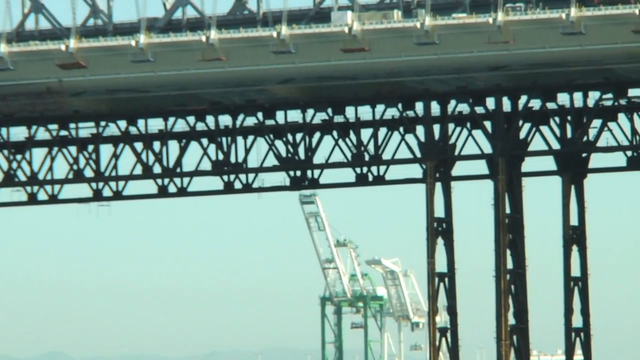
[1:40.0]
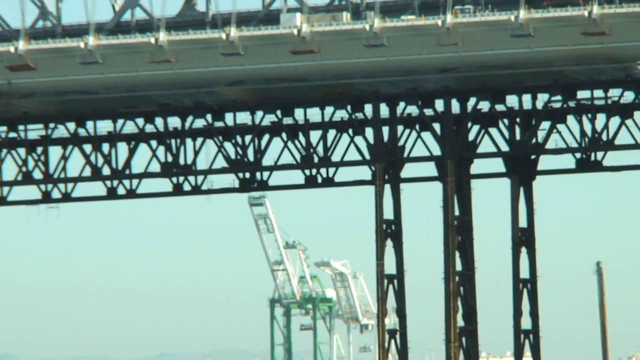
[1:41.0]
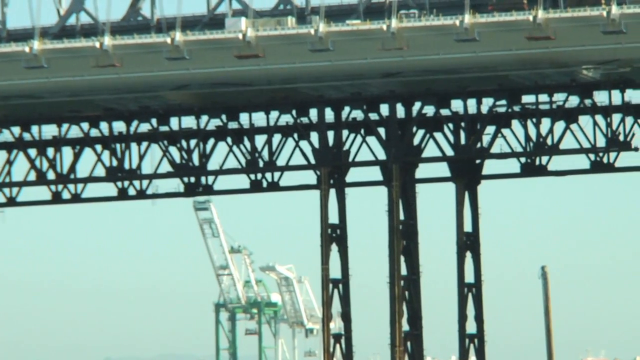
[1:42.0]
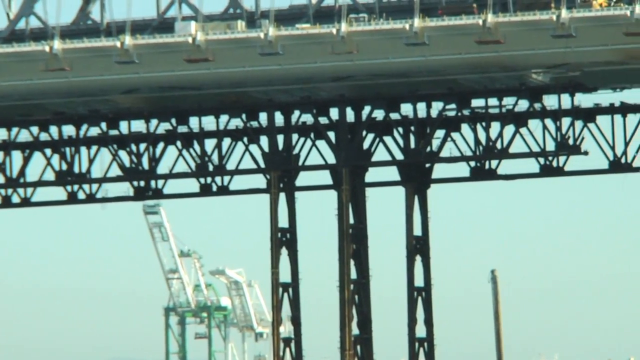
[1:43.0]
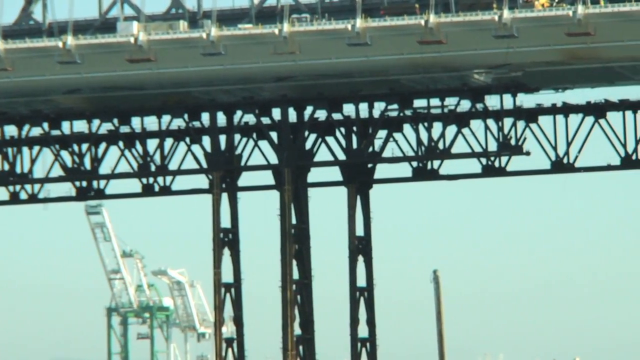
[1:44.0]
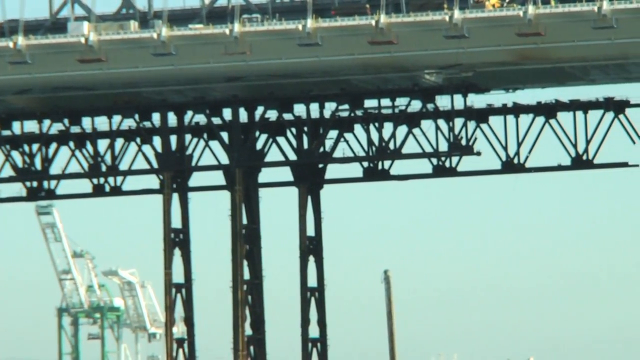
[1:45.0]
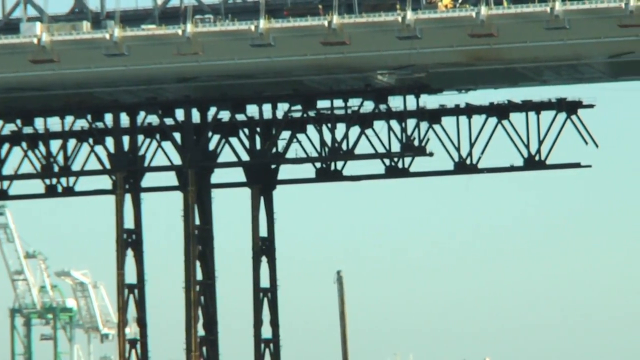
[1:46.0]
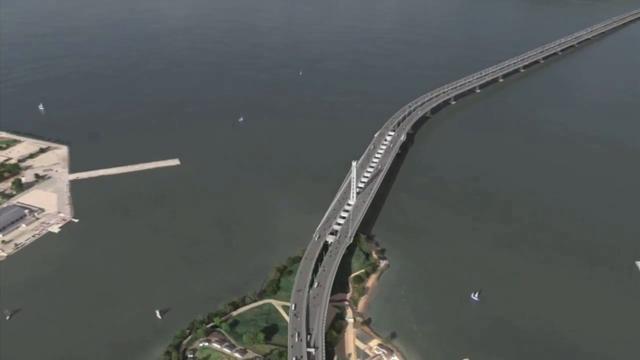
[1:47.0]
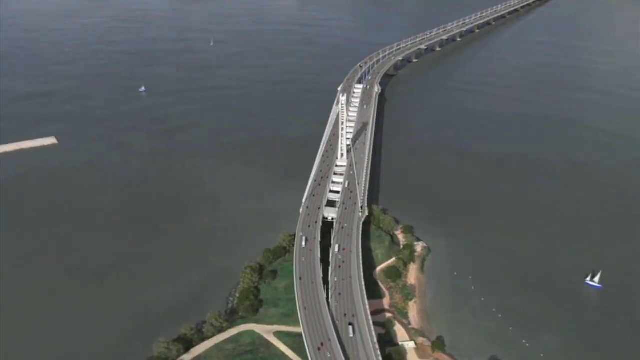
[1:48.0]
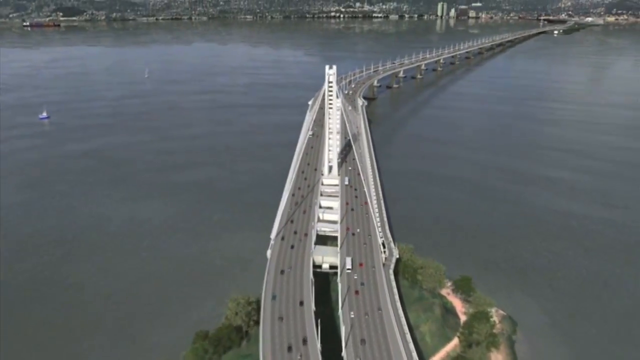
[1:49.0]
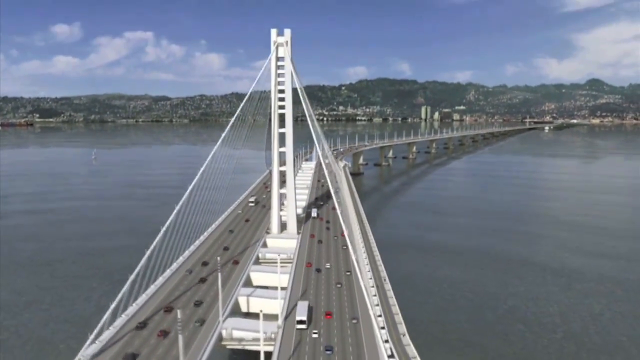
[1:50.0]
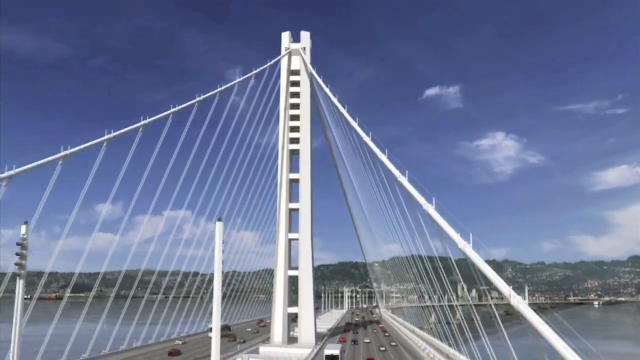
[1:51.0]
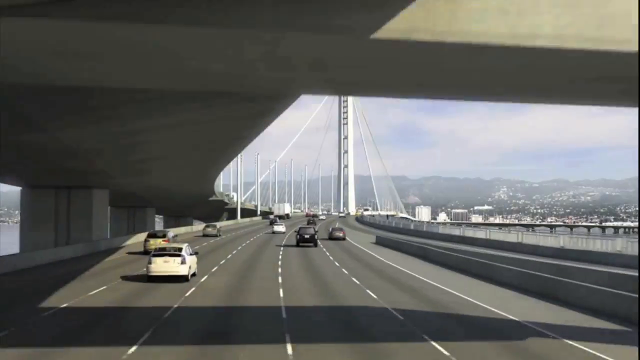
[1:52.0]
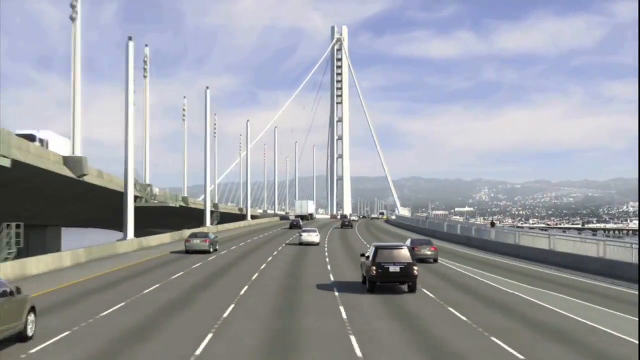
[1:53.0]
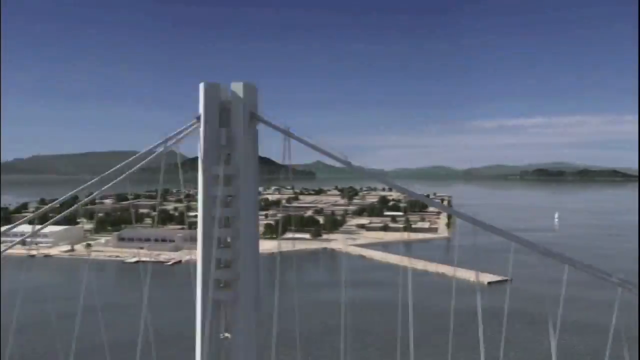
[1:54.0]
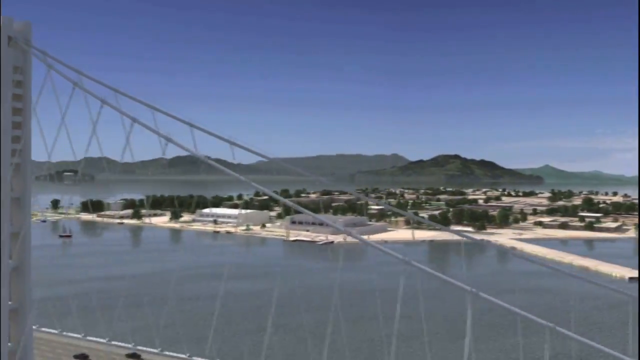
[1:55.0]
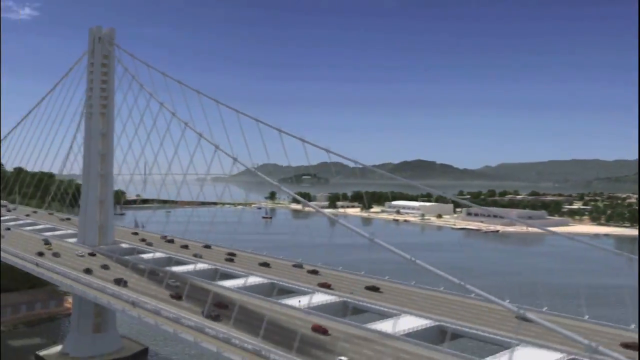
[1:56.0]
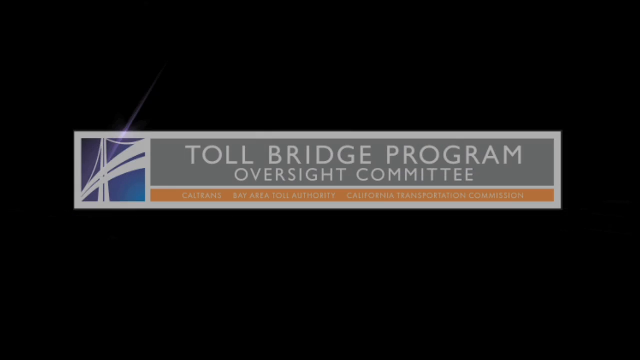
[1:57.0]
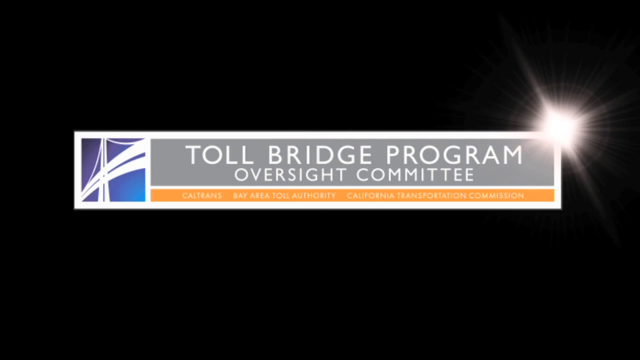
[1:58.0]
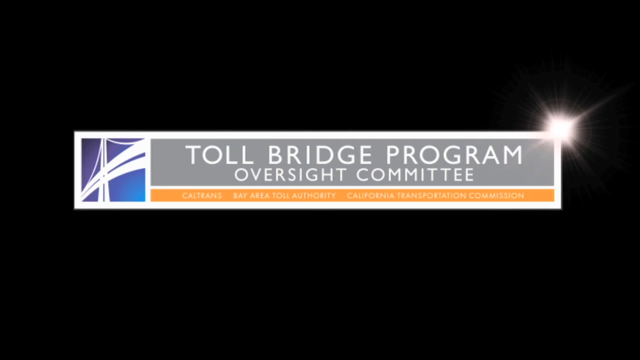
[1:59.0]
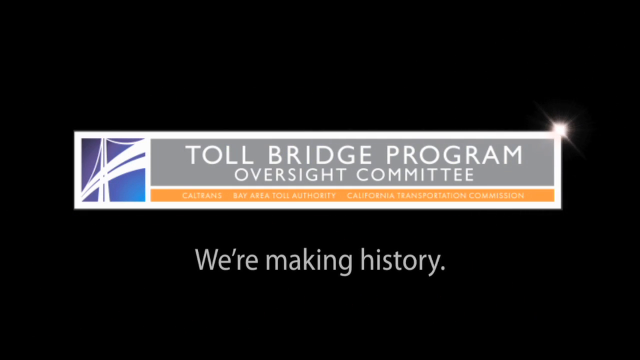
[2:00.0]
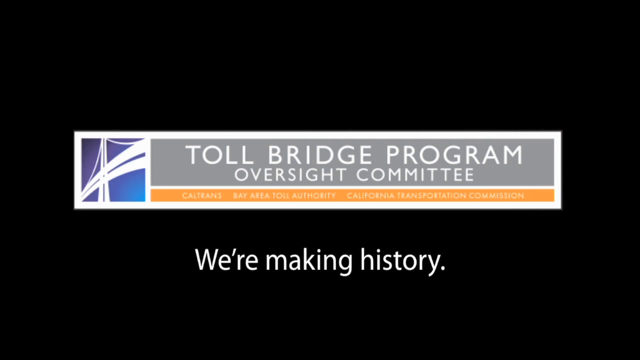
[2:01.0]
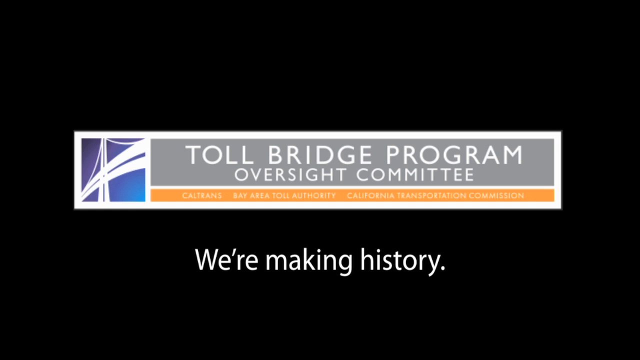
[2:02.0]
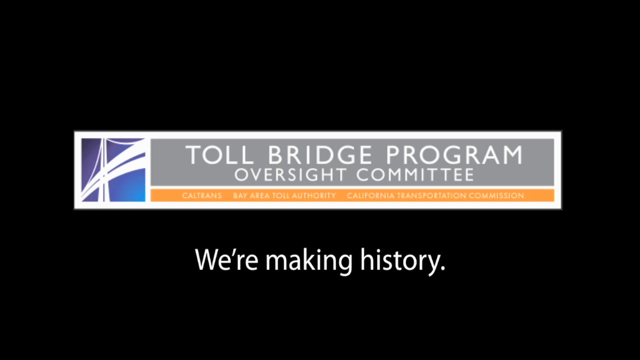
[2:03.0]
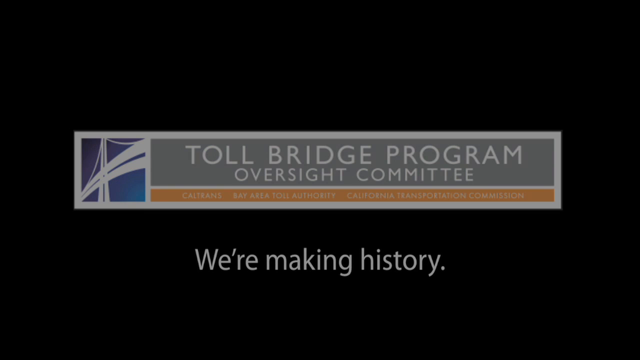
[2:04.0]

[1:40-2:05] More angles of the bridge follow. The first is from below, showing railings or metal pieces protruding from the lower part, with triangular figures. Then a scene shows the finished bridge, with the white tower that holds the huge cables. Images follow of what appears to be the point of view of a car on the bridge, looking at the white tower up close. Finally, another aerial view shows the bridge from a different angle, displaying its details and height. The video ends with a black screen and the logo of a company called "Toll Bridge Program Oversight Committee" with "We are making history."